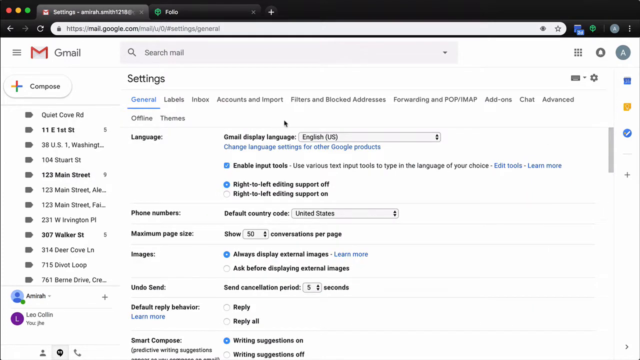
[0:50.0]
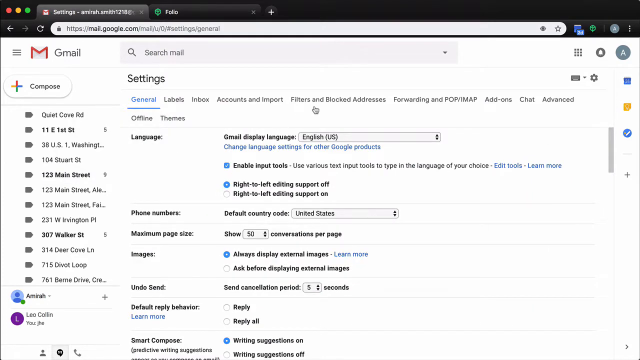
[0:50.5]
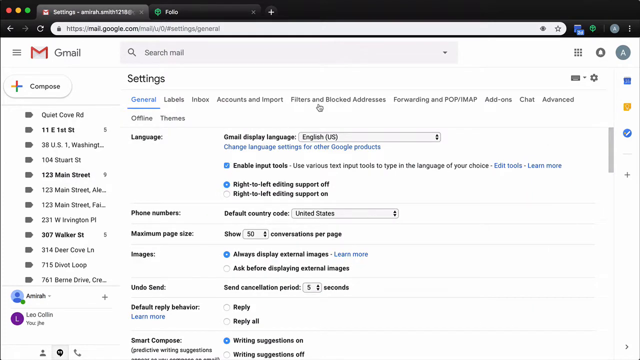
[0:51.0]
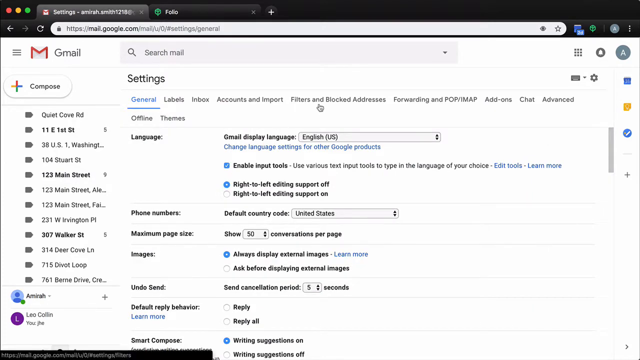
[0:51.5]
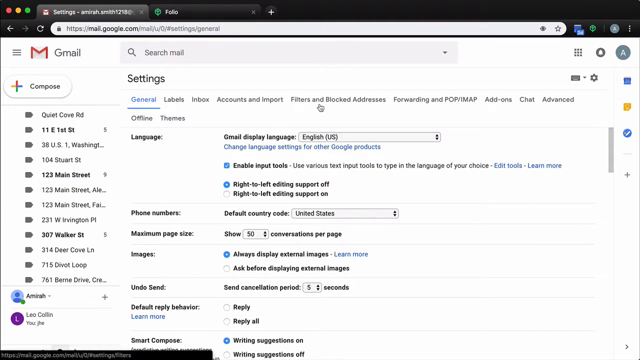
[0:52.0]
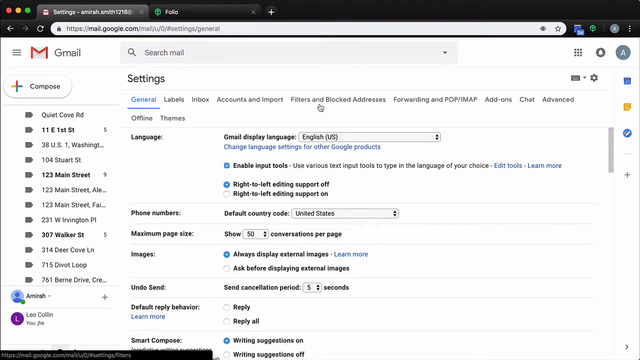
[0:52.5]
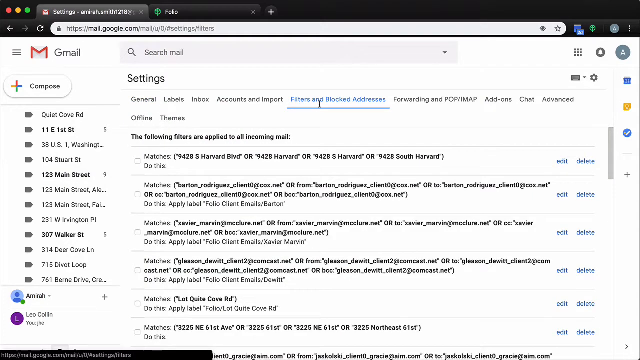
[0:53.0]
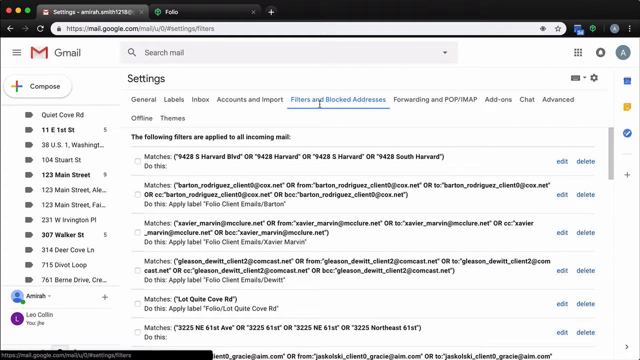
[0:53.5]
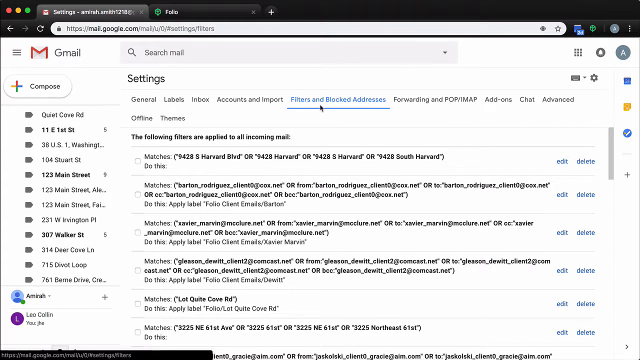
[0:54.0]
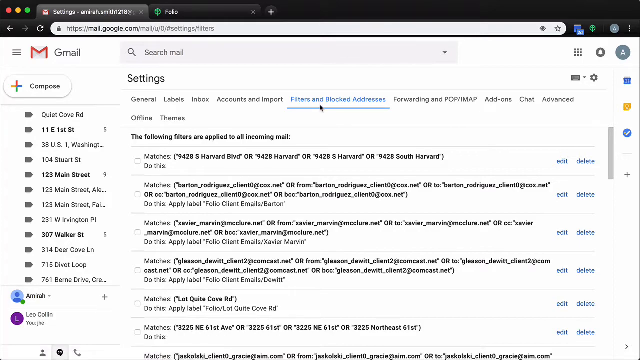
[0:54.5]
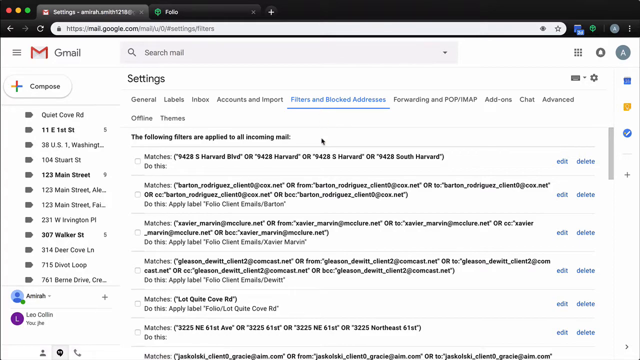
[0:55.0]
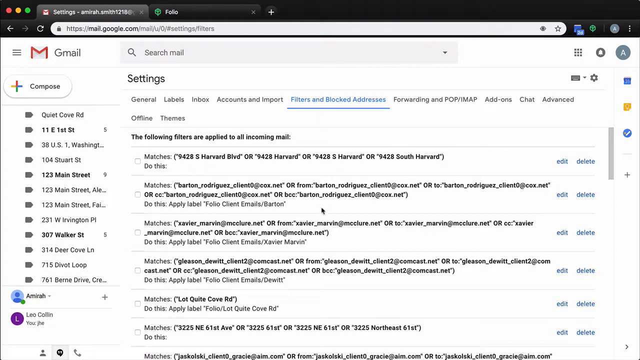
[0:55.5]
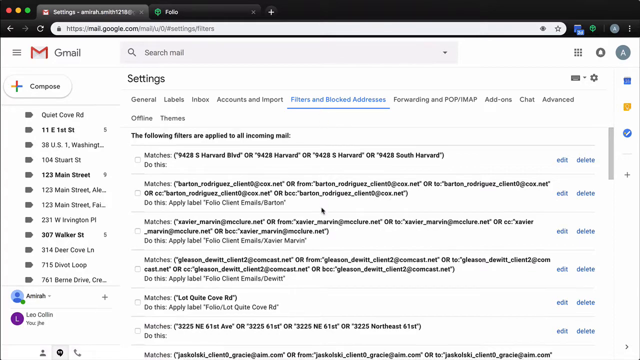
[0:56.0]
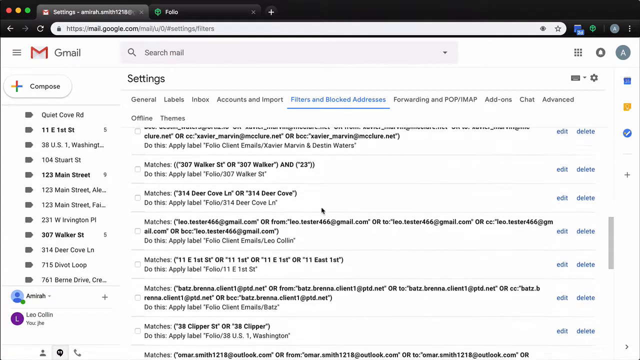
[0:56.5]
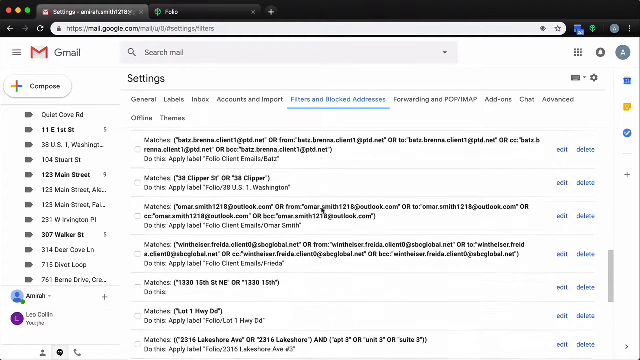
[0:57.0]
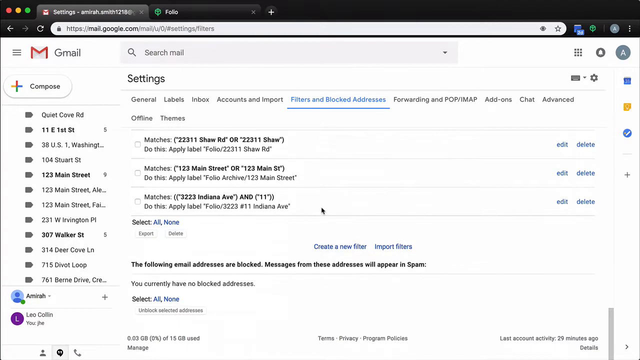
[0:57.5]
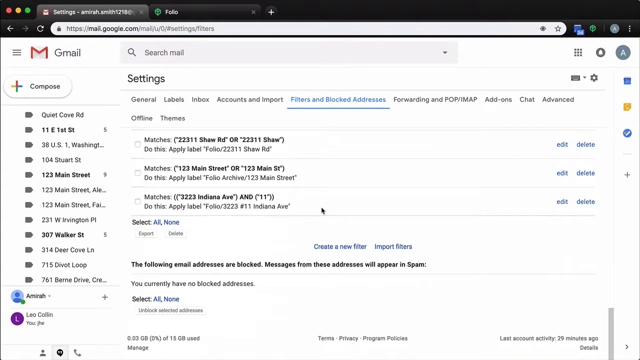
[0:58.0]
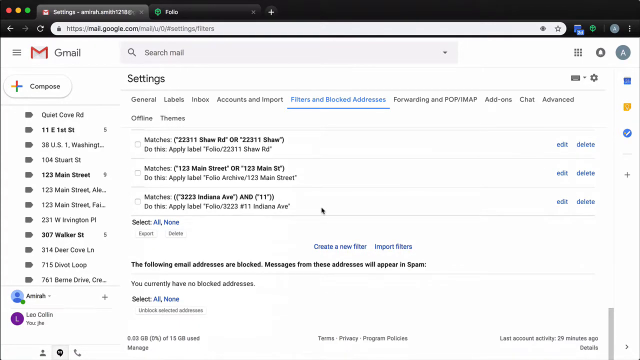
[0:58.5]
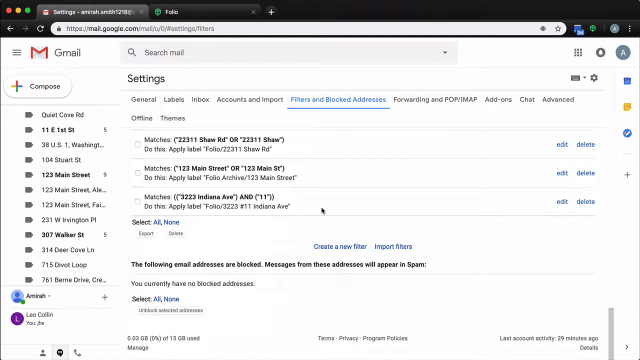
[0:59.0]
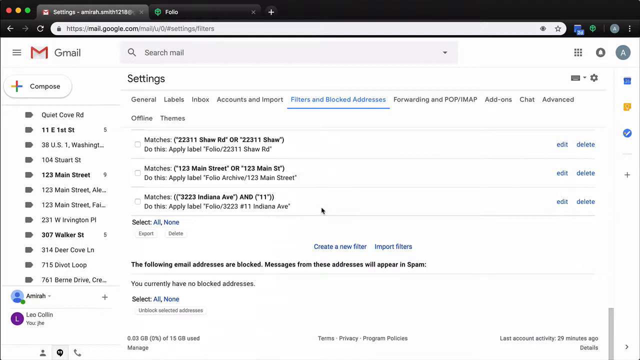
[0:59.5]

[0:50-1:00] The user hovers over and clicks the category Filters and Blocked Addresses, which contains many options. The page says "the following filters are applied to all incoming email". The user scrolls down through the many filters listed. On the right side of each filter there are edit and delete buttons, written in blue, while the rest of the text is black apart from the clickable text. Each filter says "Matches" followed by the keywords entered for that filter.